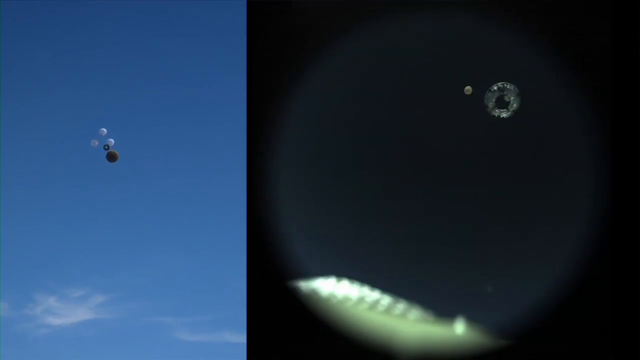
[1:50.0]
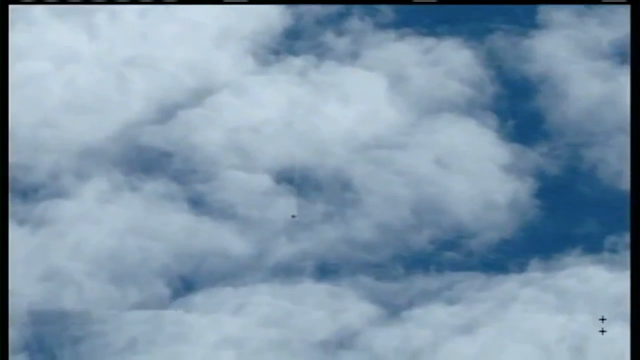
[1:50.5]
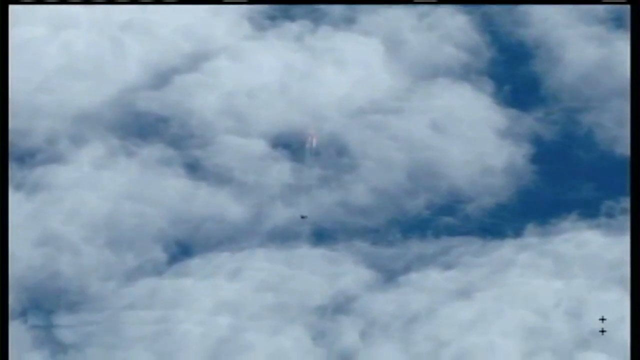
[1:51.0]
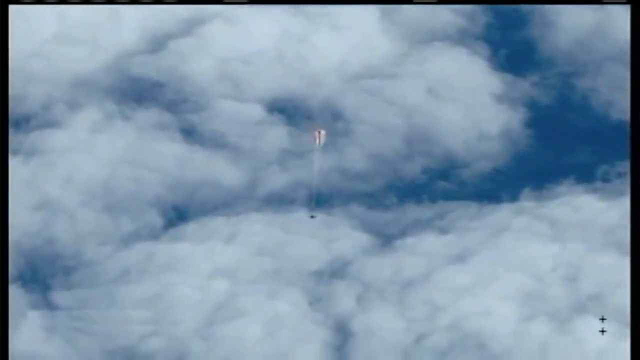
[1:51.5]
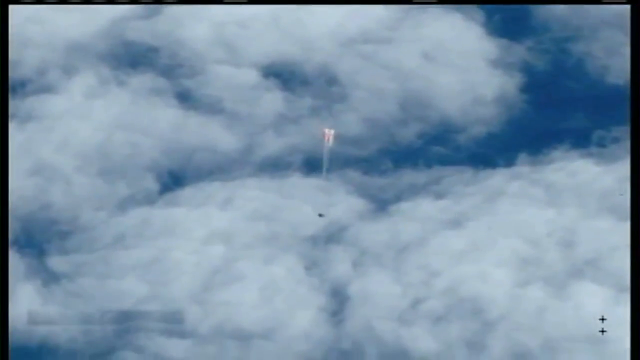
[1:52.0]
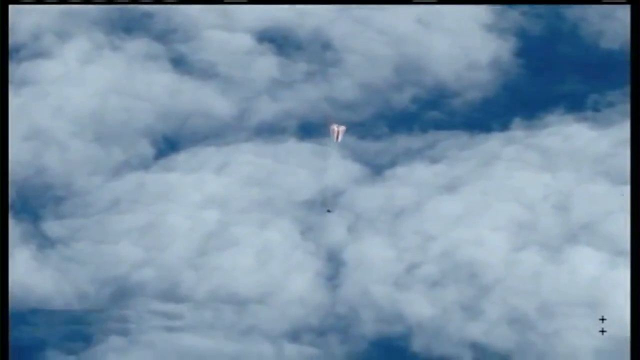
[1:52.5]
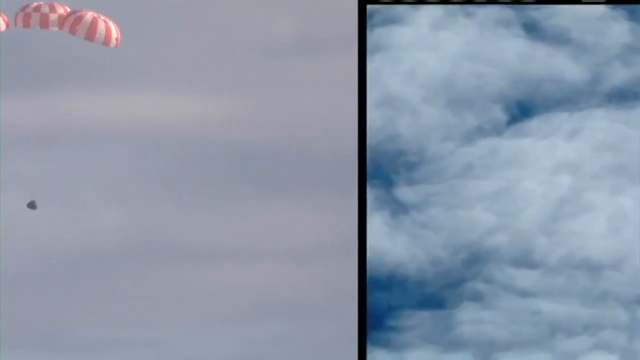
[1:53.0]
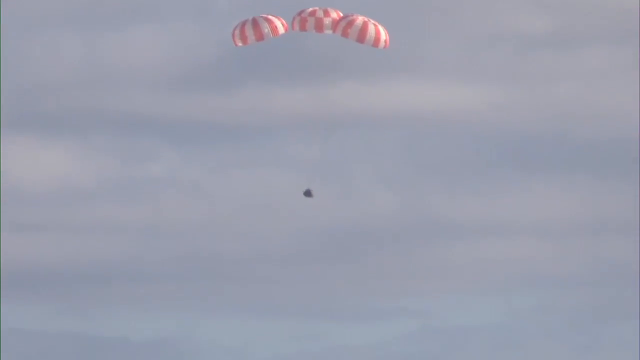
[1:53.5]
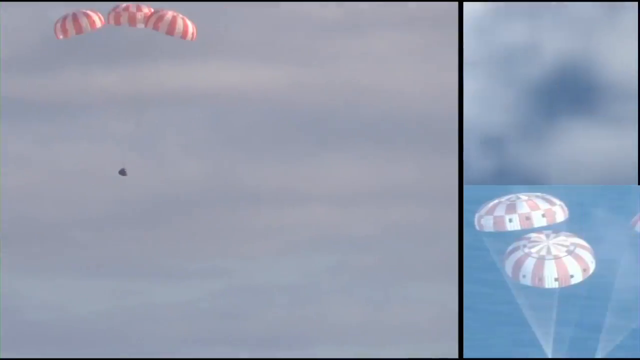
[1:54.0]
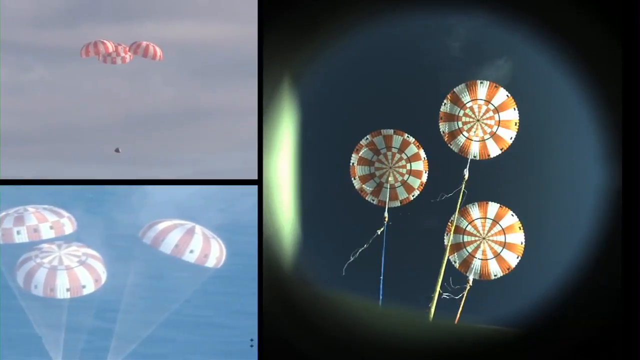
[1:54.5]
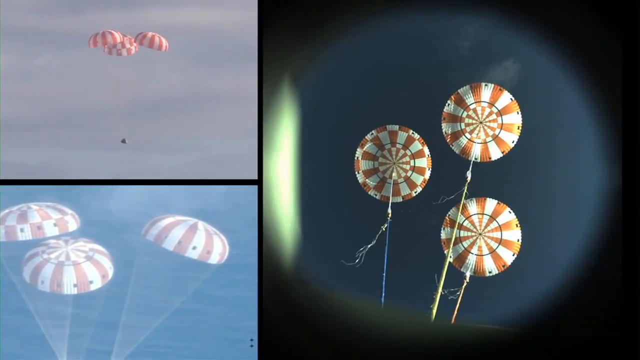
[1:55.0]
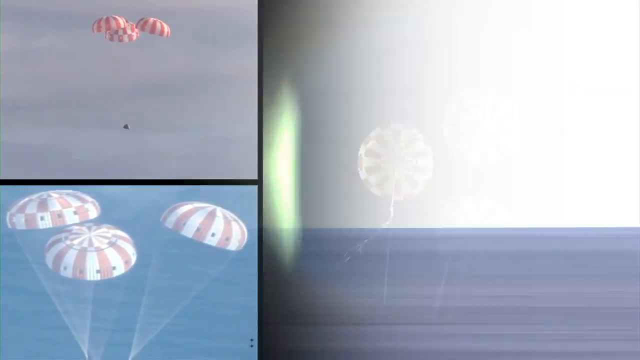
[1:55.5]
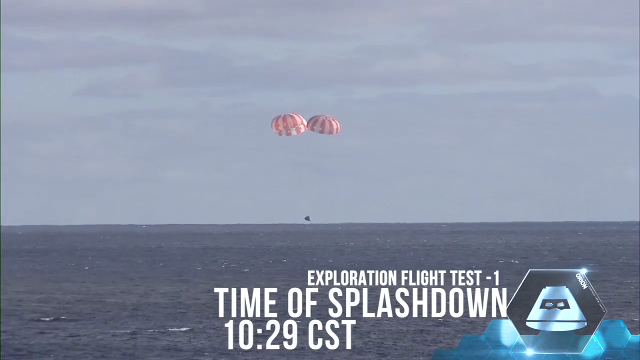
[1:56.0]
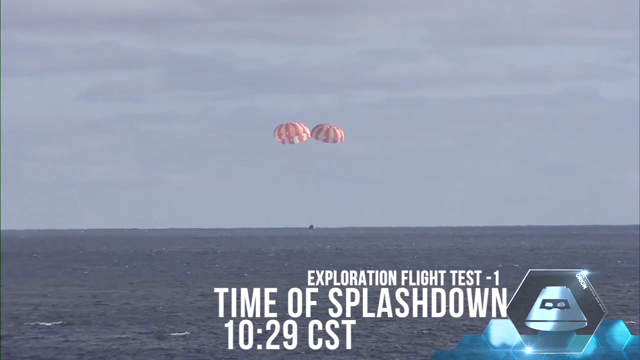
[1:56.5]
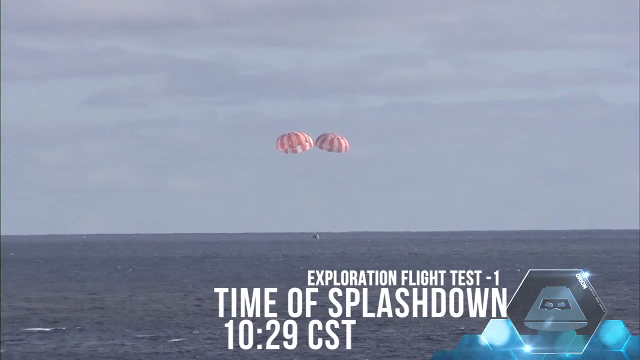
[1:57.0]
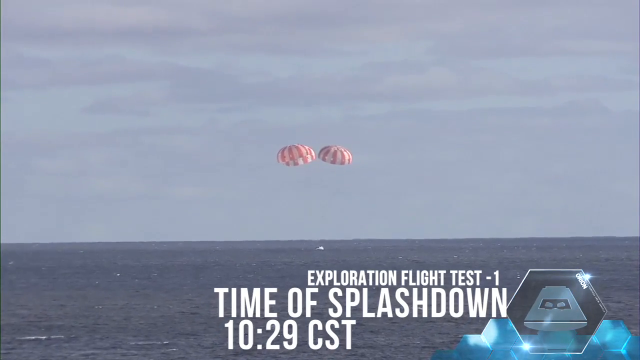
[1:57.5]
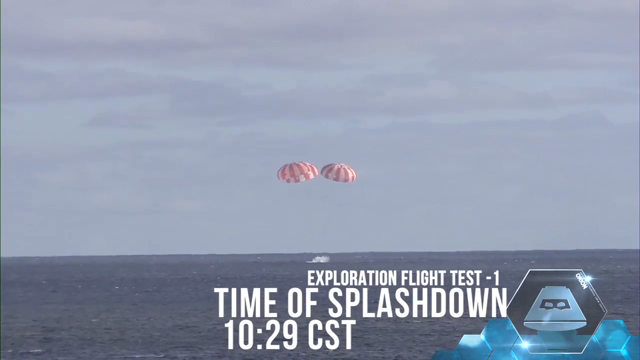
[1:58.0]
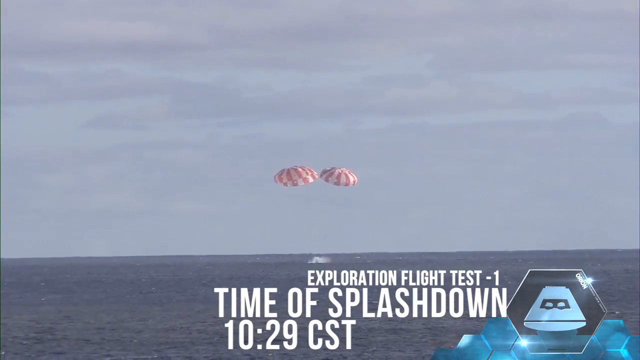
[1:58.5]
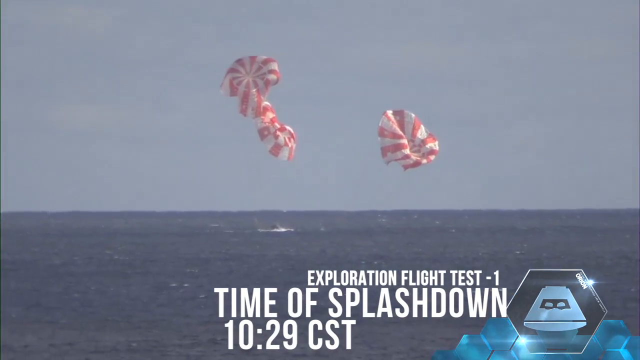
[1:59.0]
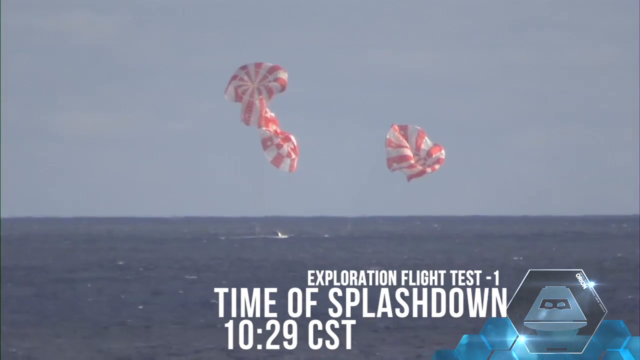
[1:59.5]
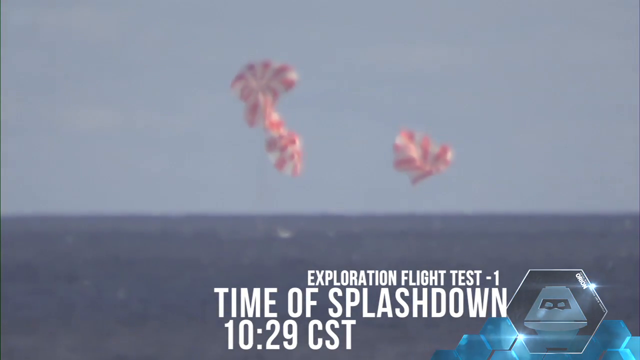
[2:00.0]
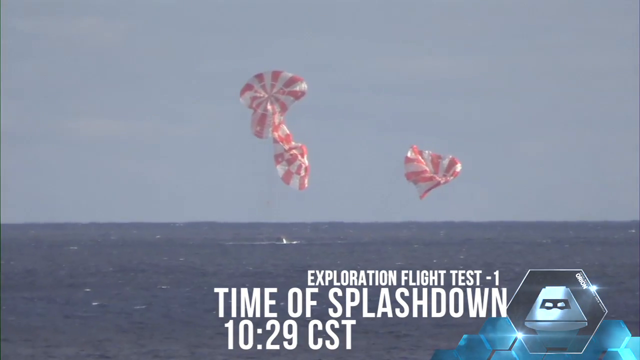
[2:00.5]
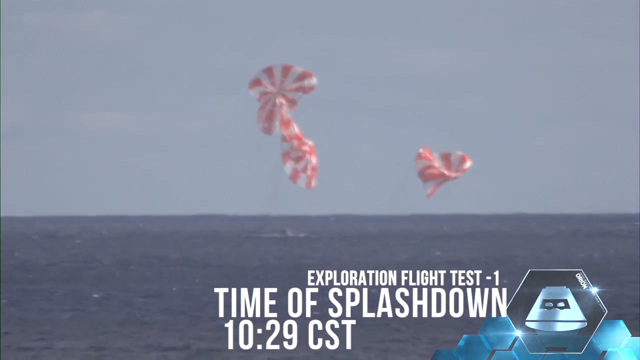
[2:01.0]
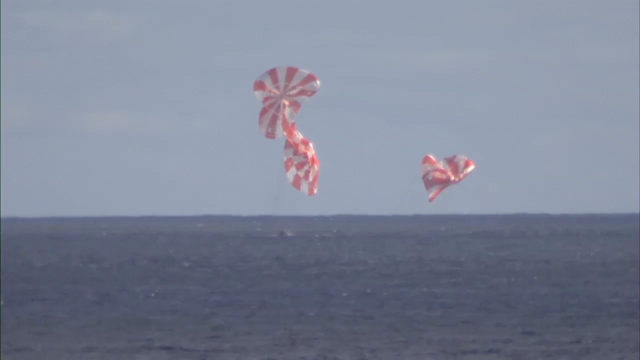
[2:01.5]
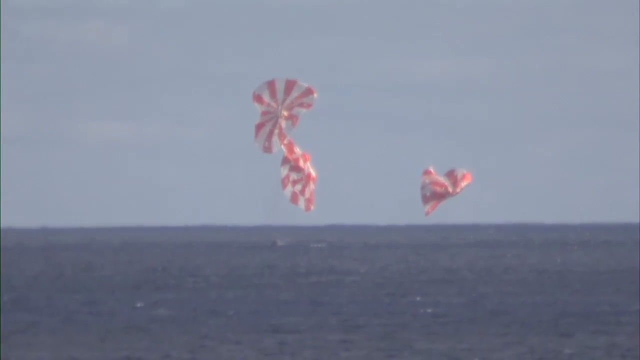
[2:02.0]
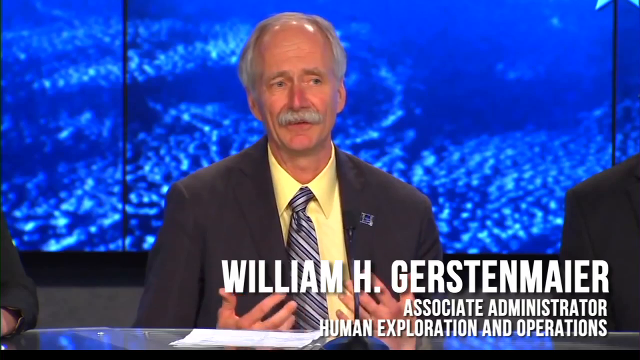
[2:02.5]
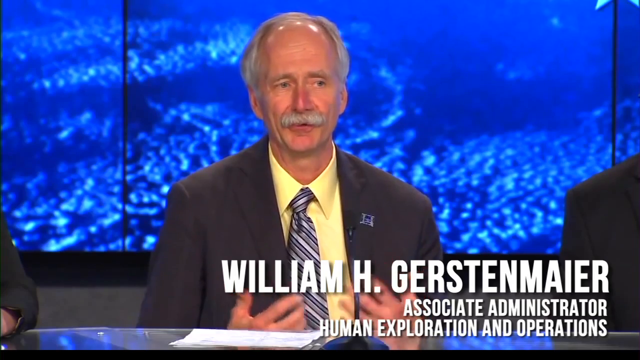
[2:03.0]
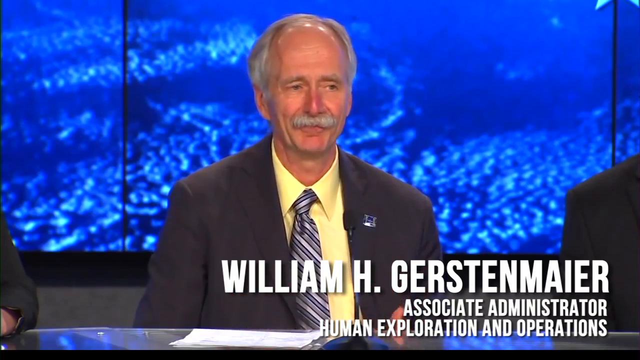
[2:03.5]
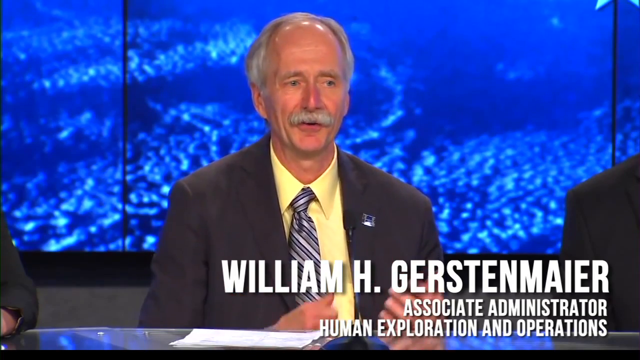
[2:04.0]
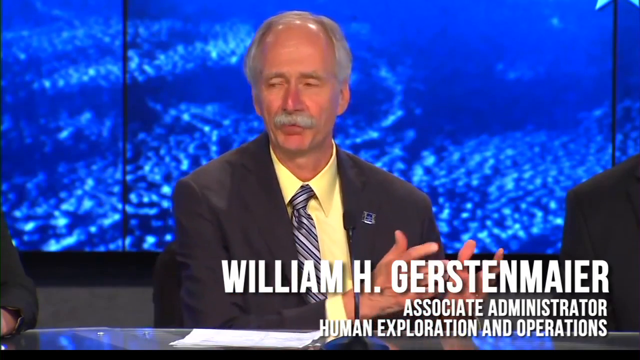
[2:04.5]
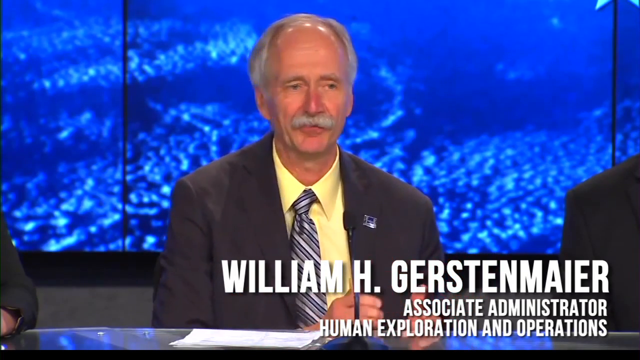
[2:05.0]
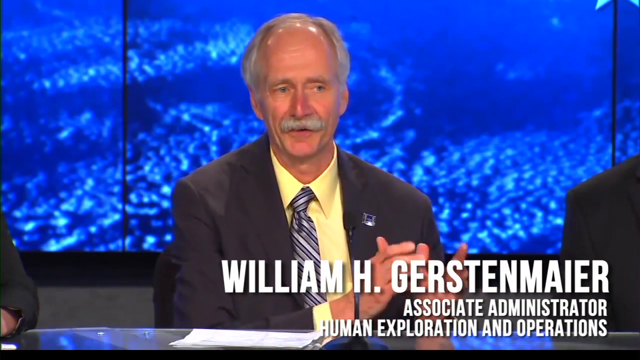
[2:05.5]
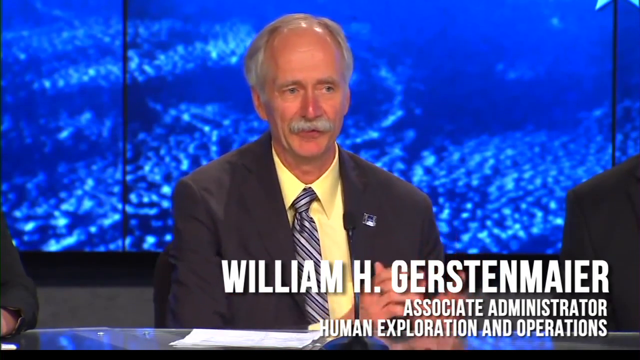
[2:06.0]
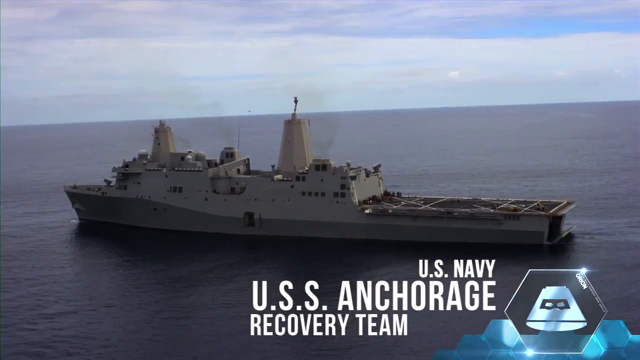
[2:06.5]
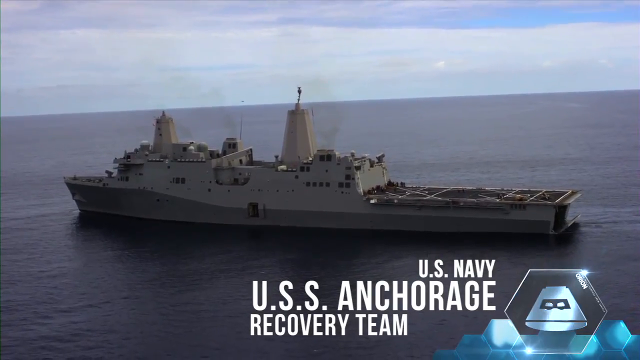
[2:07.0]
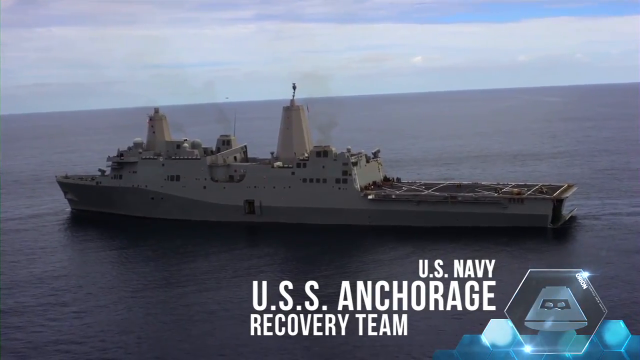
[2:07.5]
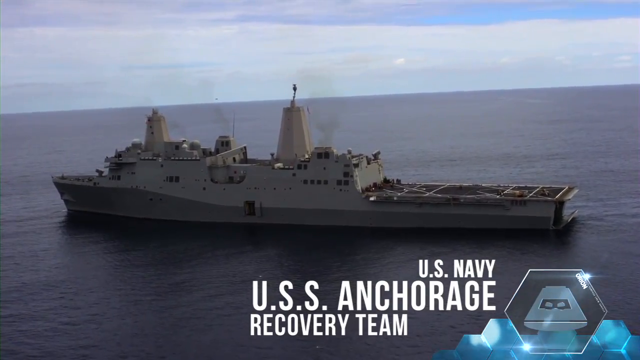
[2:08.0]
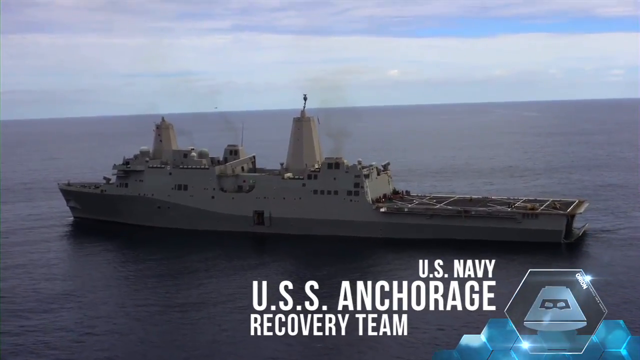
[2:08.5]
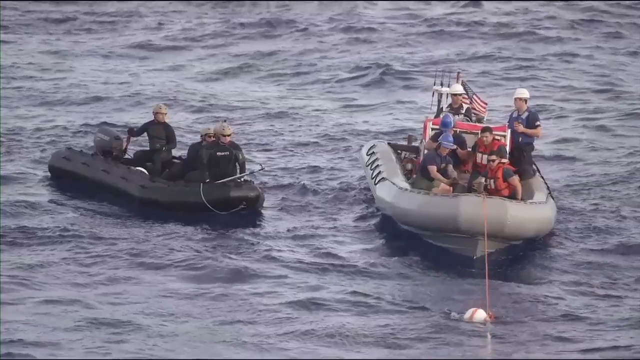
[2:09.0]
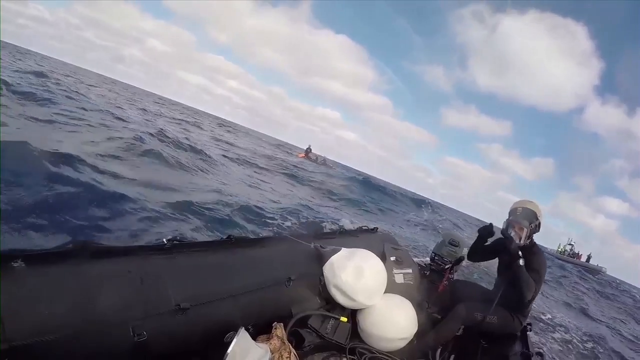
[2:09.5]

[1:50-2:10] Multiple angles film the heat shield returning to Earth, one of which may be coming from the heat shield itself. Various cameras film its descent through the atmosphere, with clouds in the background. Red and white parachutes appear, multiple chutes attached to the heat shield, with at least three distinct parachutes visible across multiple pictures. The heat shield films itself looking up at the parachutes; it looks as though another aircraft may be in the air filming it, and it is also filmed from a boat on the ocean, with multiple angles shown simultaneously on screen. A screen display shows "exploration flight test one time of splashdown" with a time that appears to be 10:29 CST. The heat shield hits the water and the parachutes collapse. Interview footage follows with the Associate Administrator Human Exploration and Operations, William H Gernstenmaier, who has a moustache. Then a large USS Anchorage US Navy recovery team is shown on a ship at sea, with small boats that go out to collect the heat shield.